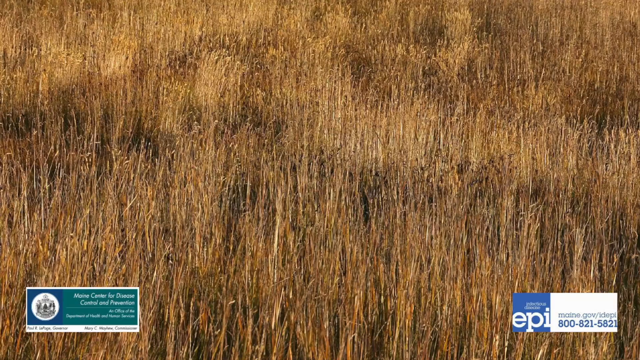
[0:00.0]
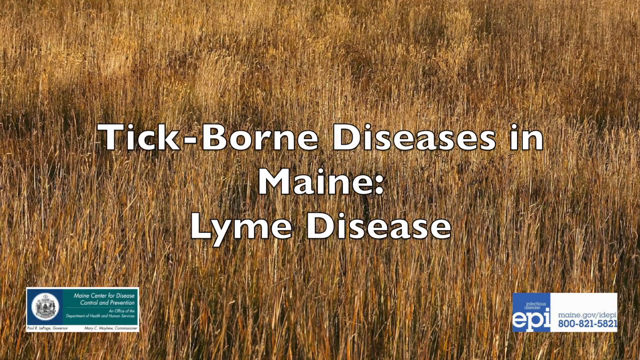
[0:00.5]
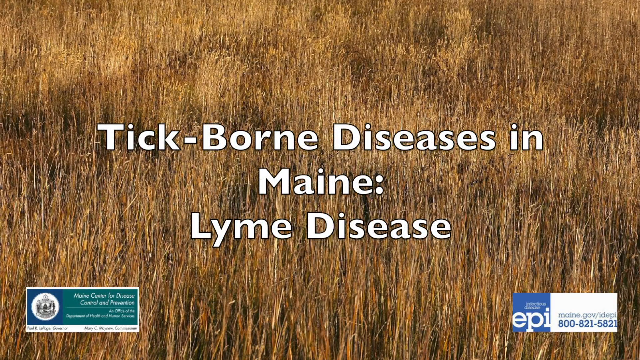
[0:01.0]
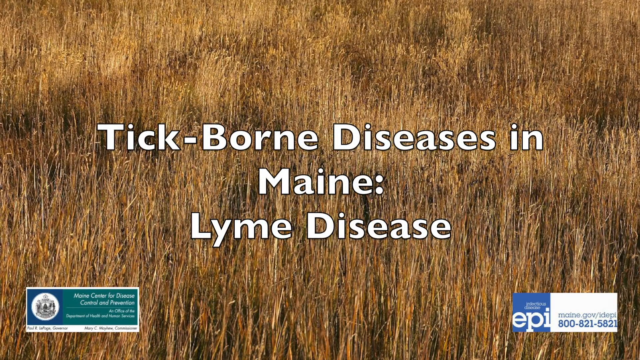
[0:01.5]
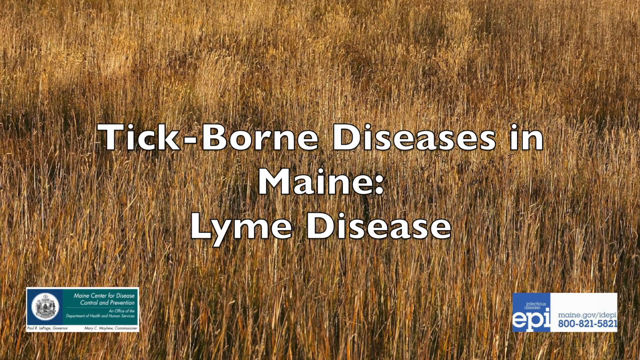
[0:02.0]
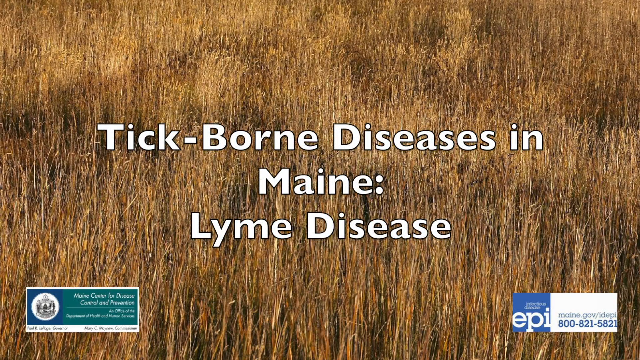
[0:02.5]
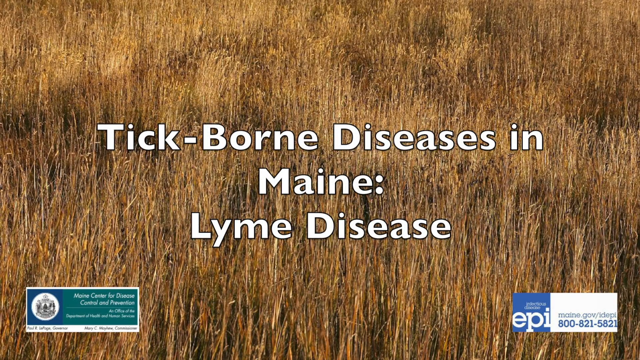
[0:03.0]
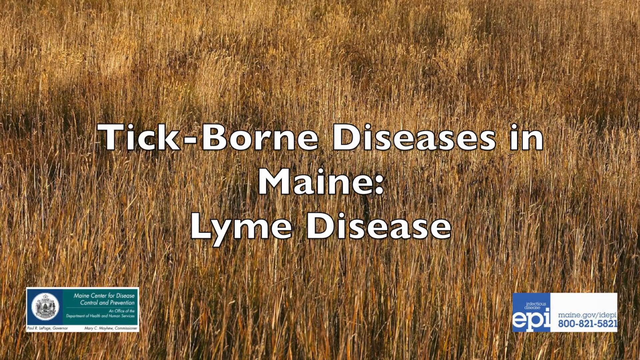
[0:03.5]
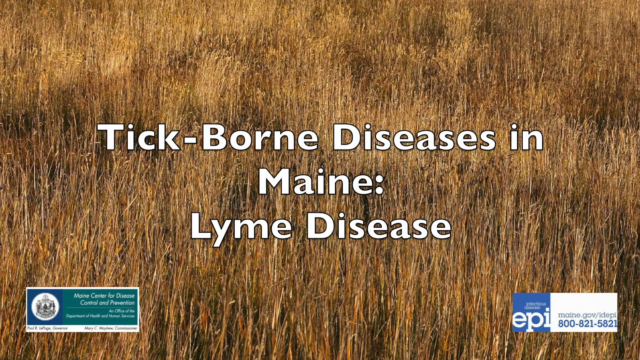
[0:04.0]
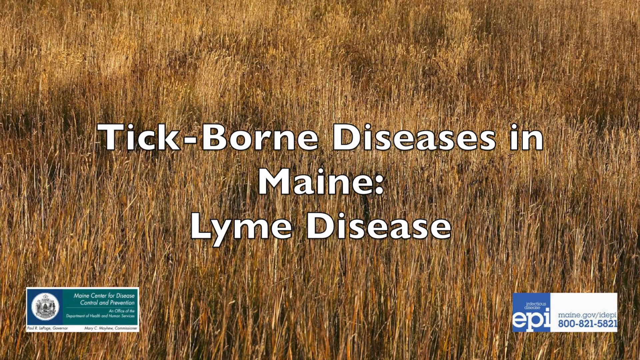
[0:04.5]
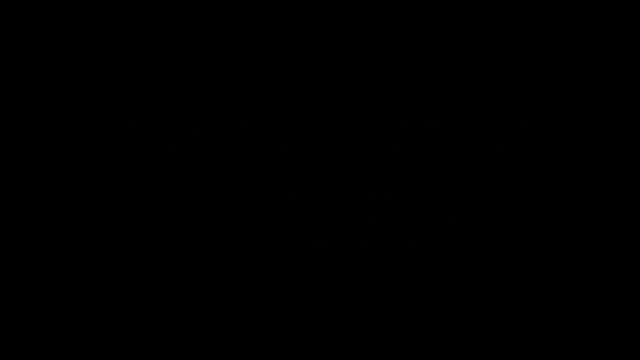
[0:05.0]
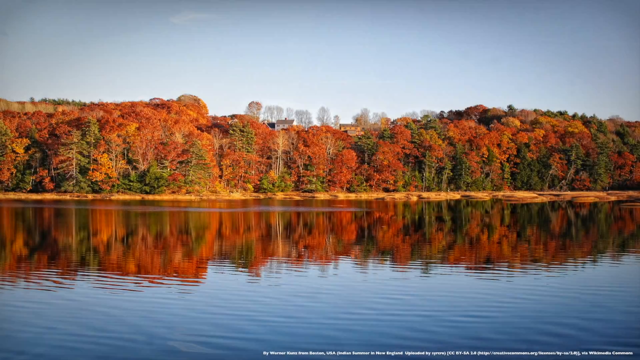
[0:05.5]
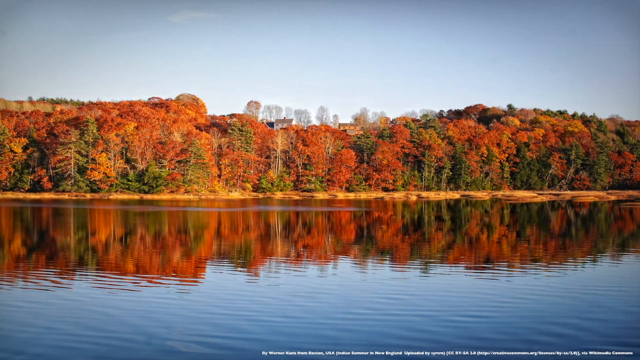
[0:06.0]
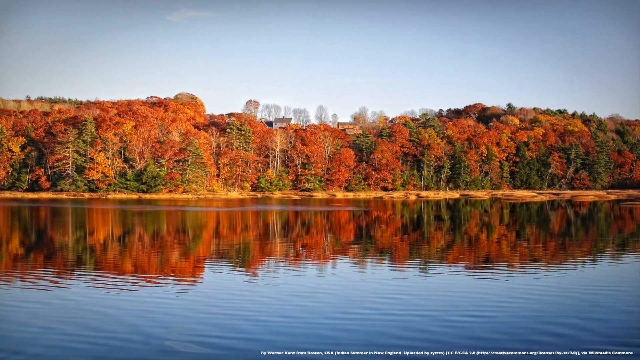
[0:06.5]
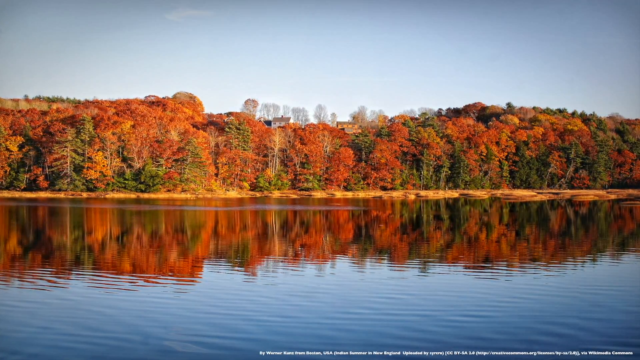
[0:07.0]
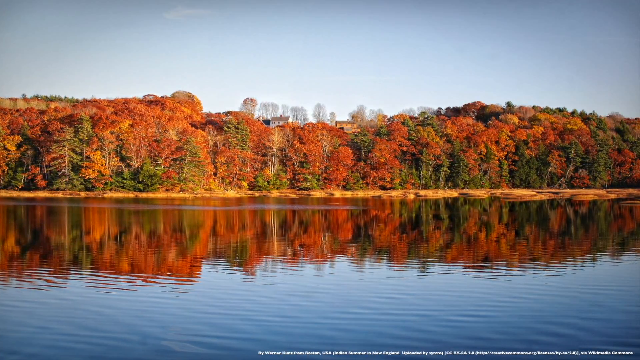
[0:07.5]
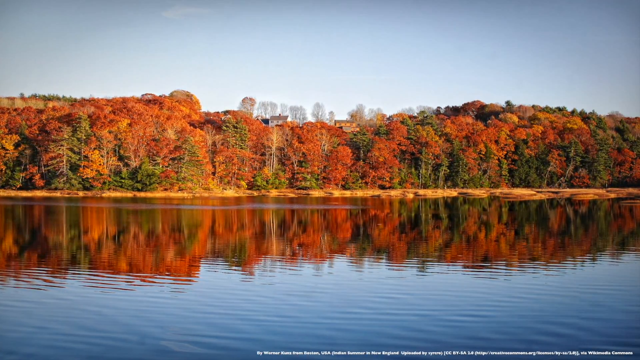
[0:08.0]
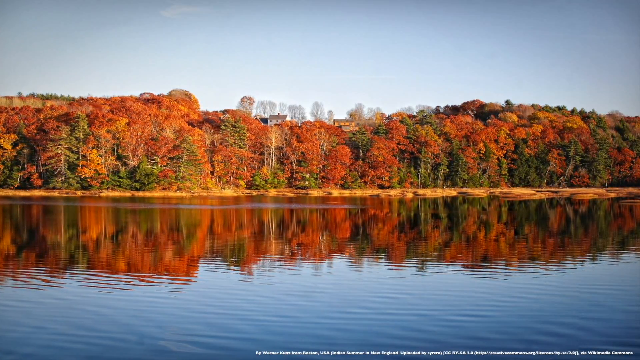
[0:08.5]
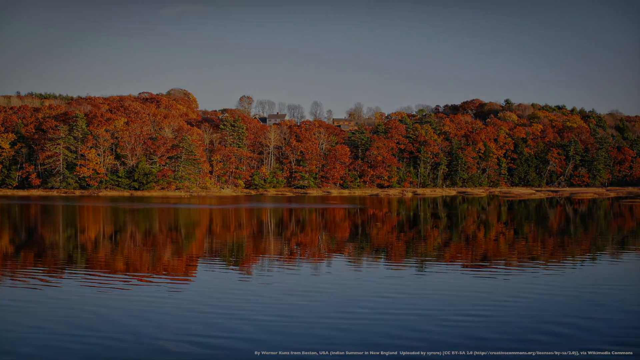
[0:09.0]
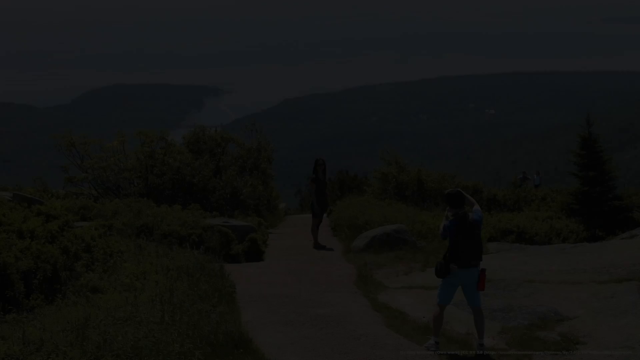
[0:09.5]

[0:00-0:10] The video opens with an introduction screen that has a brown, hair-like background. There are two labels, one in the bottom left corner and one in the bottom right corner, each with very small text. The title reads "tick-borne diseases in Maine:" followed by "Lyme disease," all in white text. The screen then changes to a nature view of a body of water, with red, green and orange trees all along the back and a light blue sky above. The camera slowly zooms in.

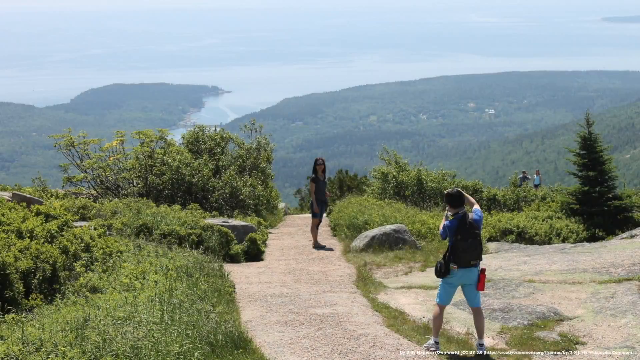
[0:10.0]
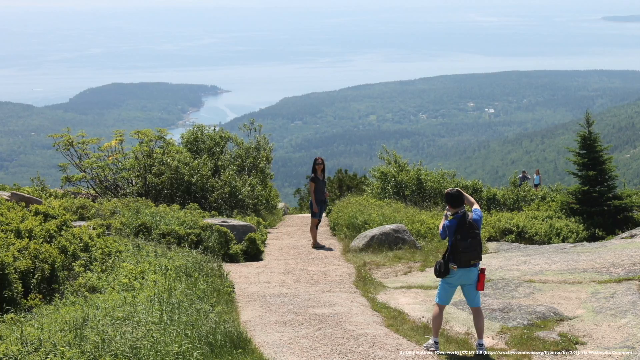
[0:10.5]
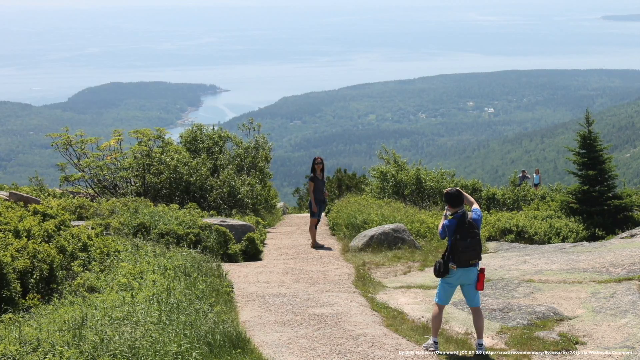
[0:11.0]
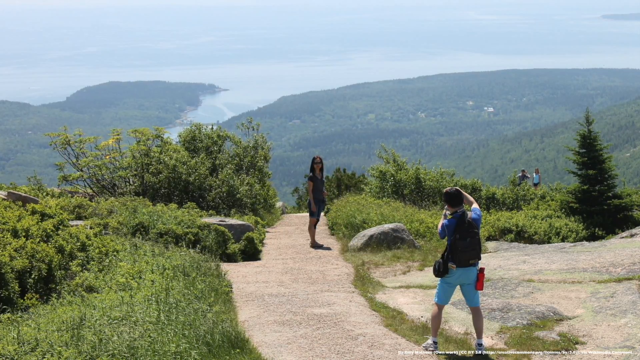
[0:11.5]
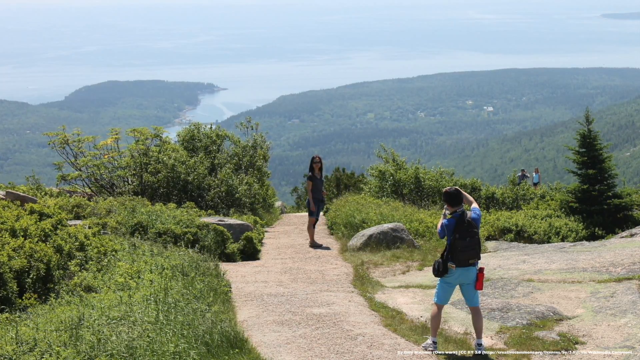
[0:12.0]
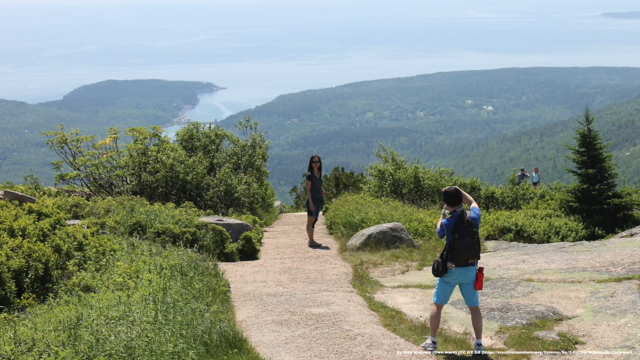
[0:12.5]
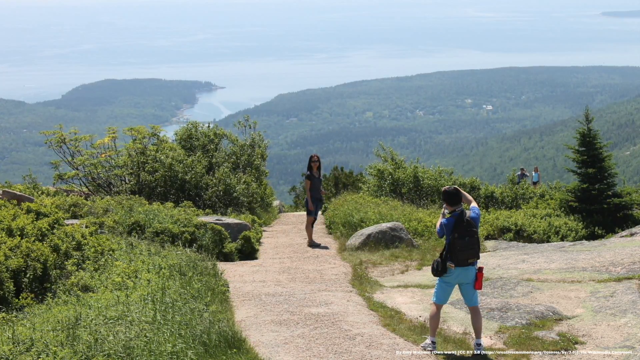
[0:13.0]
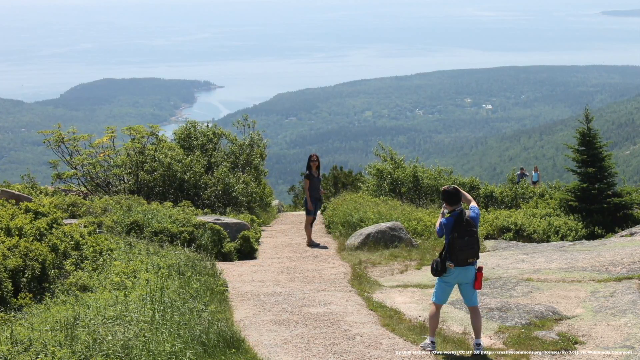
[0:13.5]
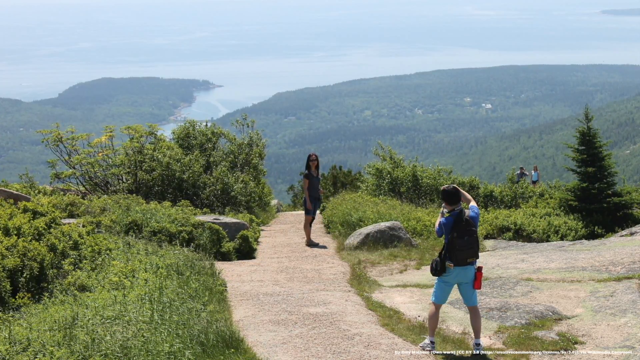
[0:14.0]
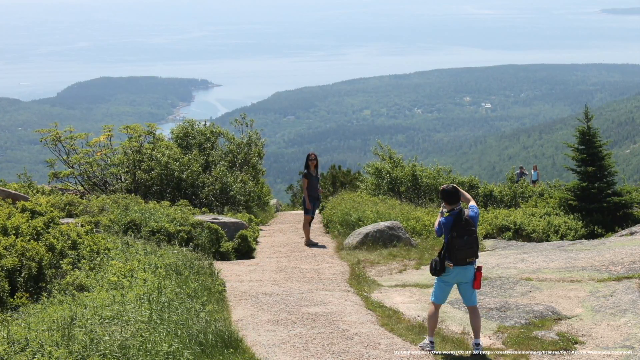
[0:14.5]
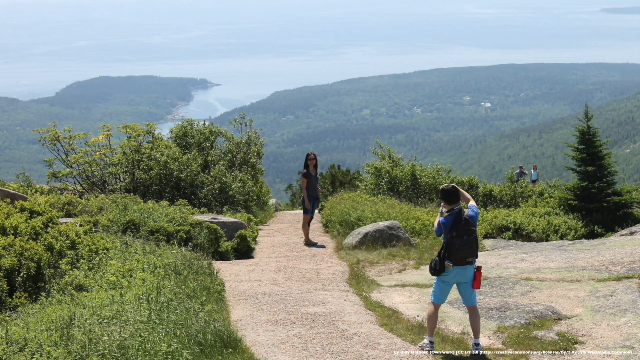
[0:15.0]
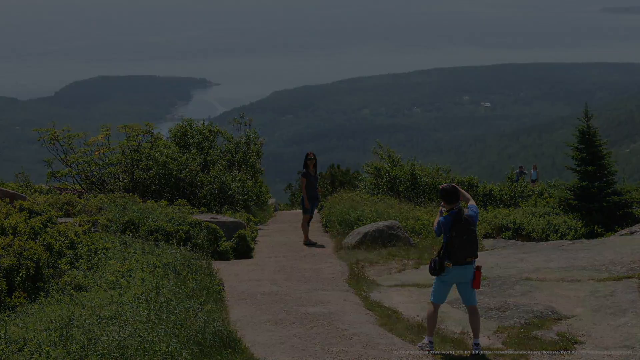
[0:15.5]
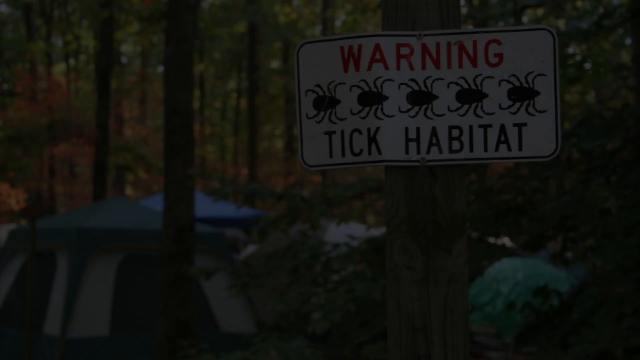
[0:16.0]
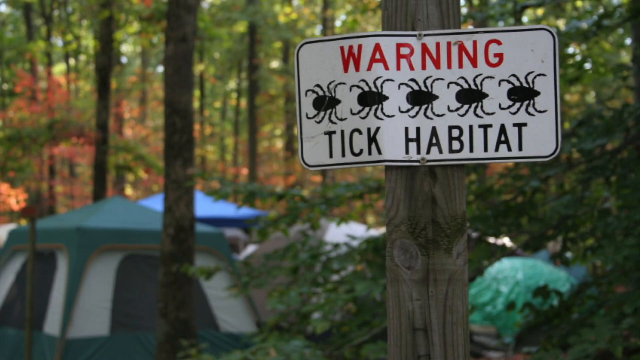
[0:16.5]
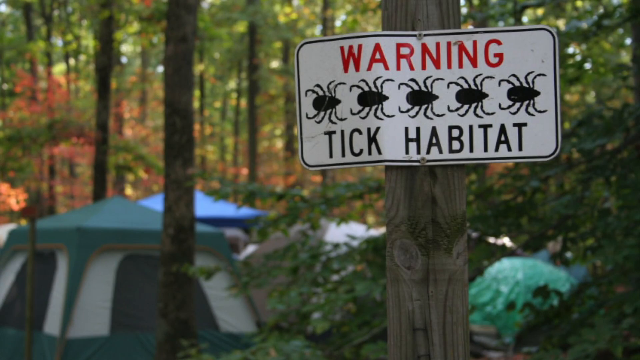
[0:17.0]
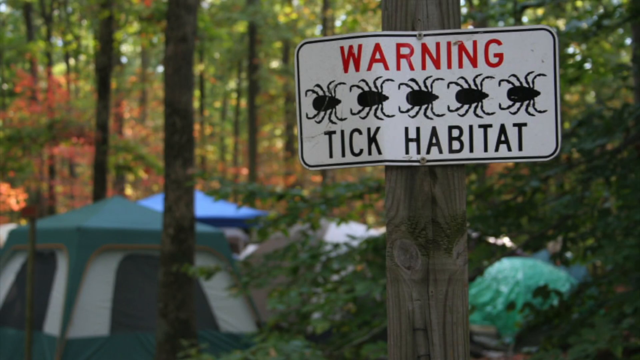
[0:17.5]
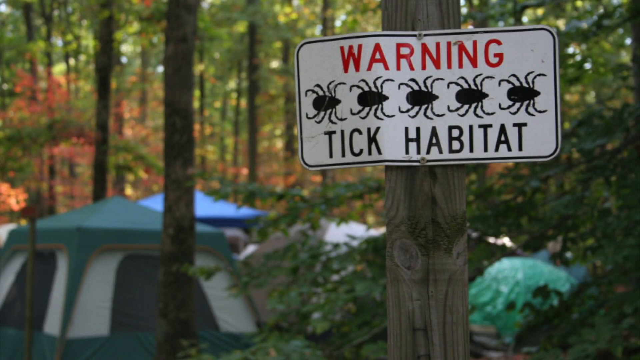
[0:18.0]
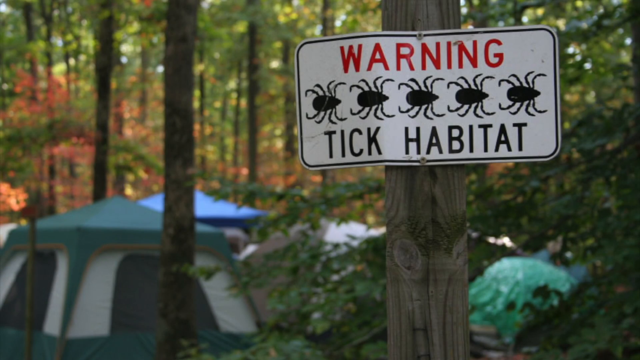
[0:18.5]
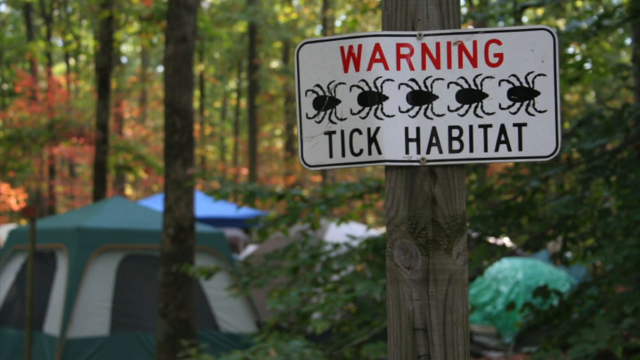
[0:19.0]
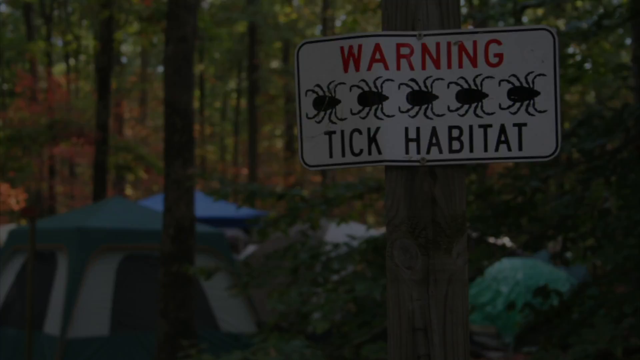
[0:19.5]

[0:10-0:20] An image shows four people outdoors on a mountain, with a paved walkway. One woman stands sideways looking at the camera, wearing shades. The person closest to the camera, seen from behind, appears to be taking a picture of the woman and the view behind her, and two people are off in the distance. There are lots of trees, and mountains are in the background. The camera slowly zooms in on the image. The next image is an up-close sign that says "warning" with five bug-like designs and "tick habitat," with some tents in the background.